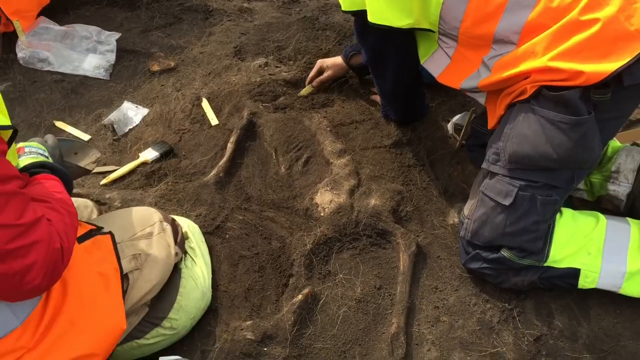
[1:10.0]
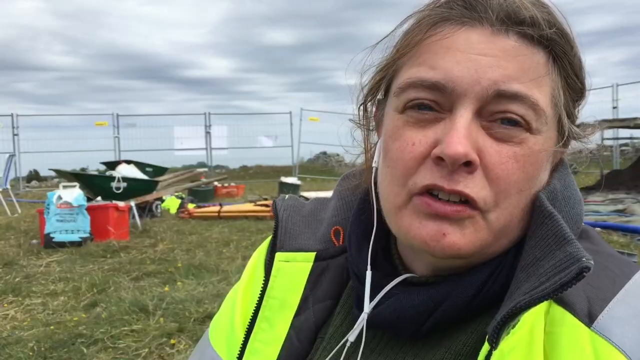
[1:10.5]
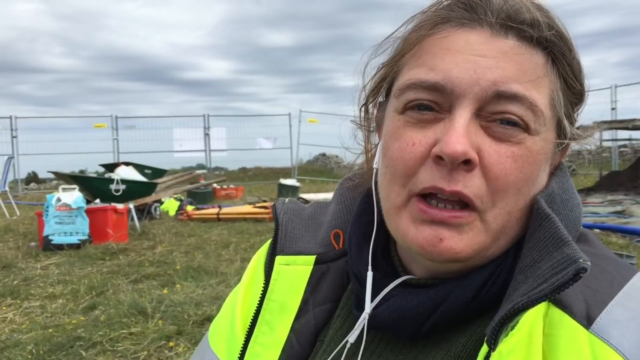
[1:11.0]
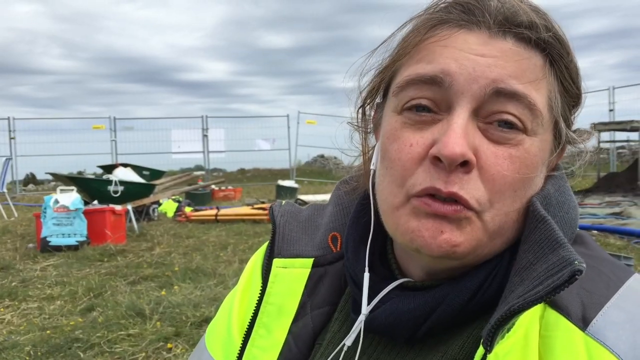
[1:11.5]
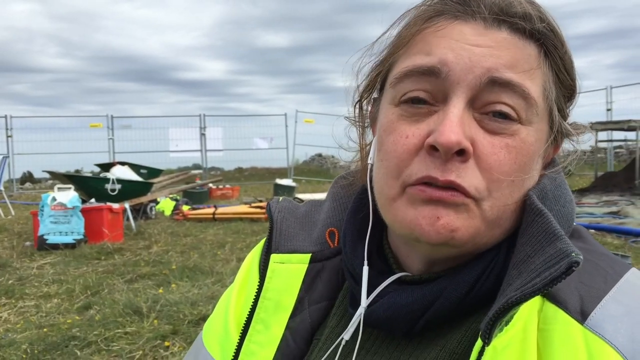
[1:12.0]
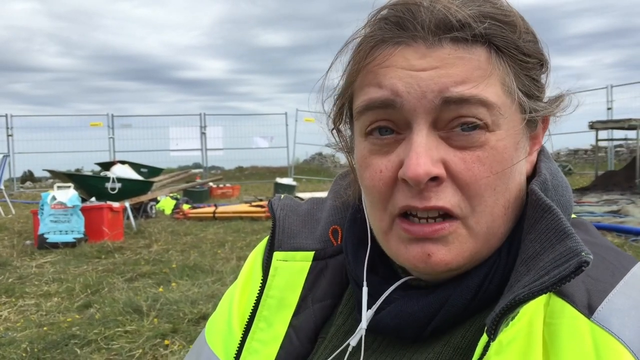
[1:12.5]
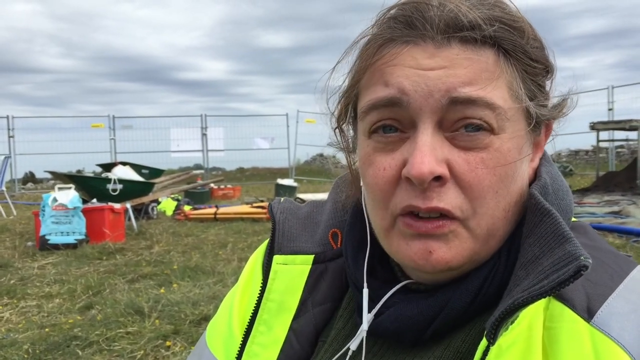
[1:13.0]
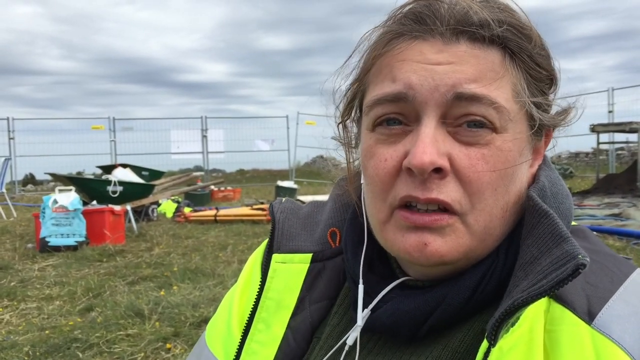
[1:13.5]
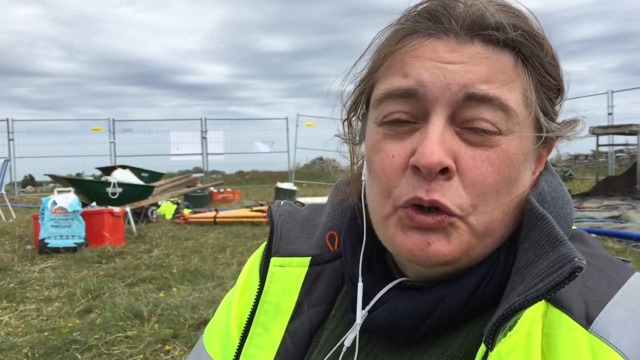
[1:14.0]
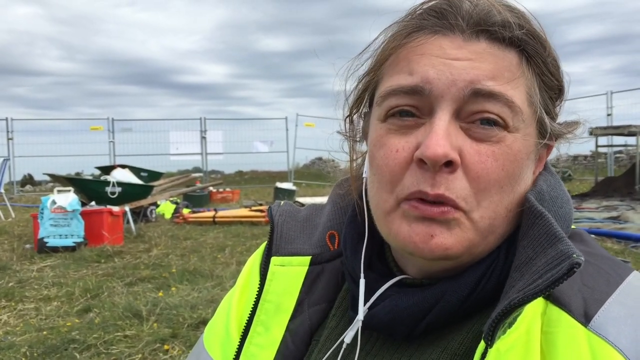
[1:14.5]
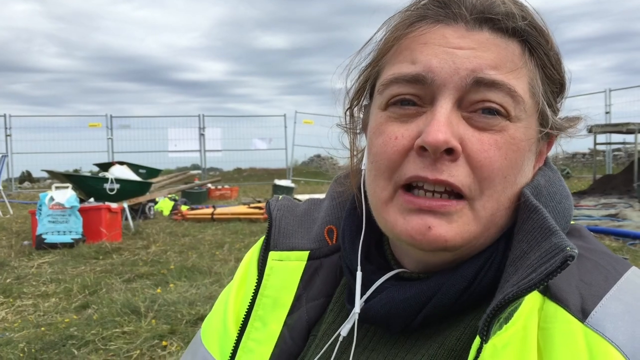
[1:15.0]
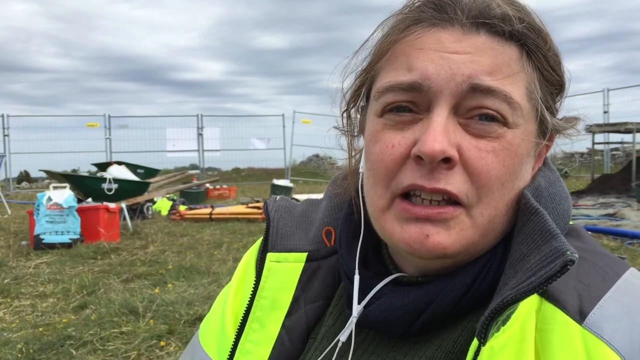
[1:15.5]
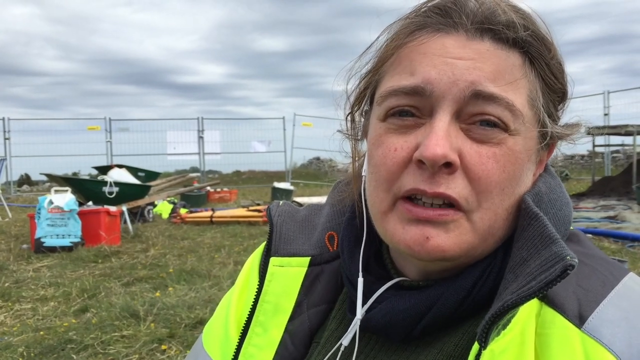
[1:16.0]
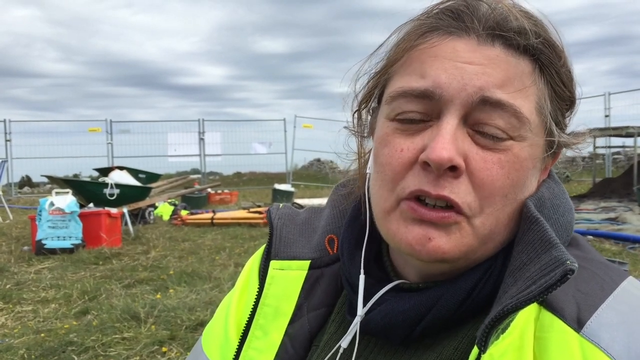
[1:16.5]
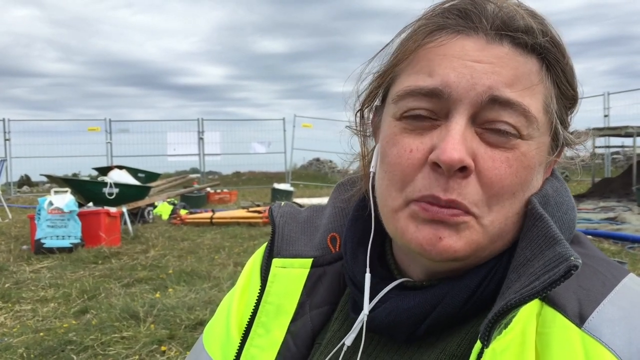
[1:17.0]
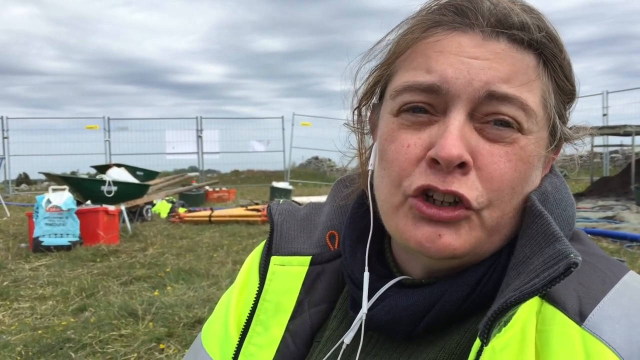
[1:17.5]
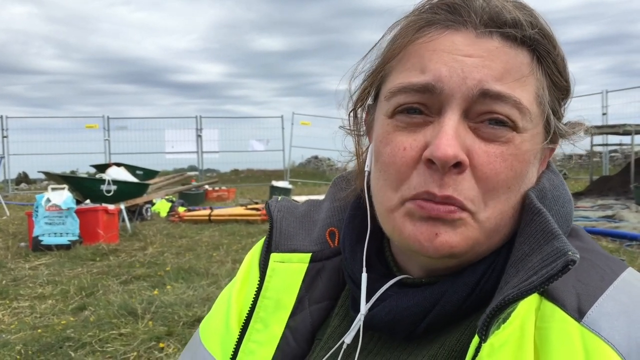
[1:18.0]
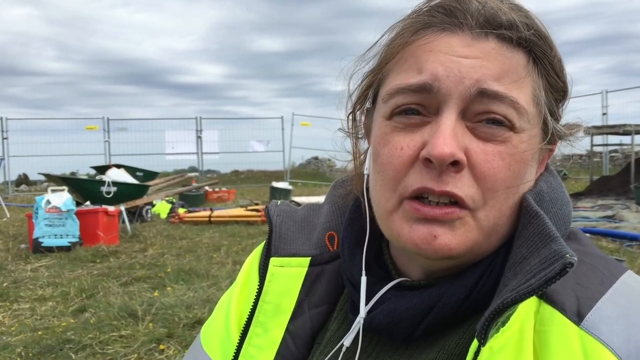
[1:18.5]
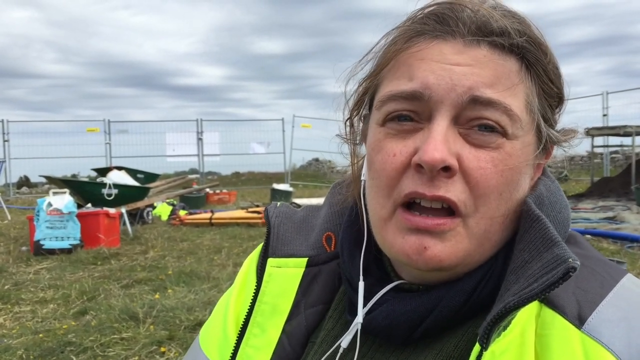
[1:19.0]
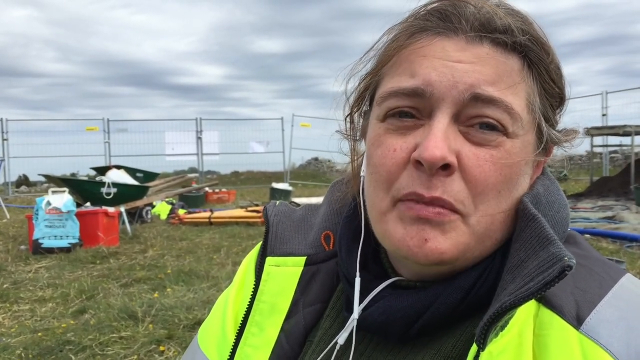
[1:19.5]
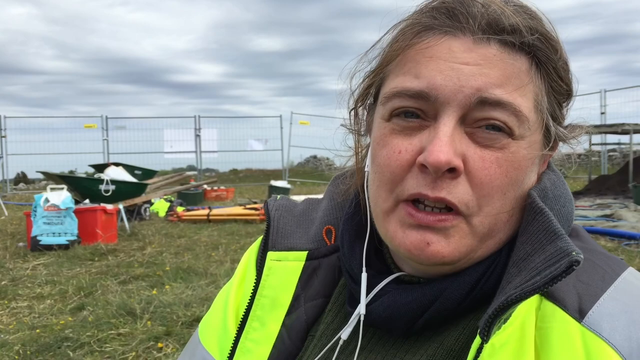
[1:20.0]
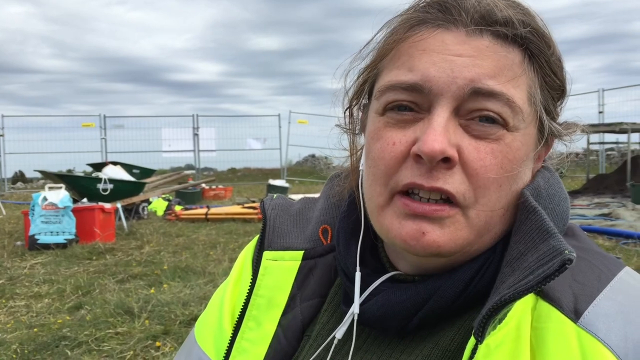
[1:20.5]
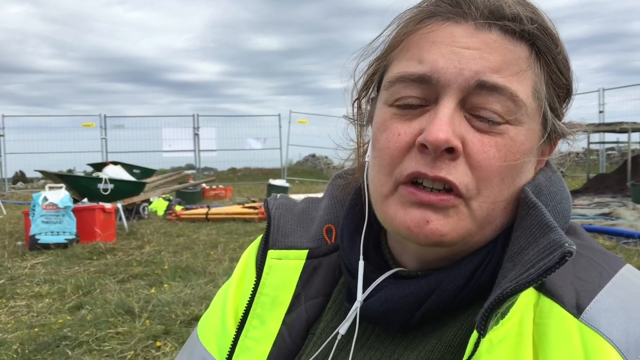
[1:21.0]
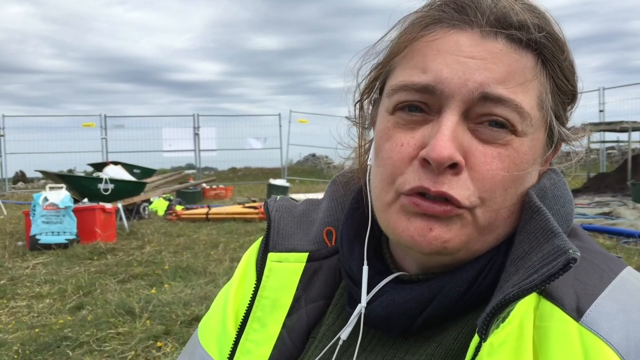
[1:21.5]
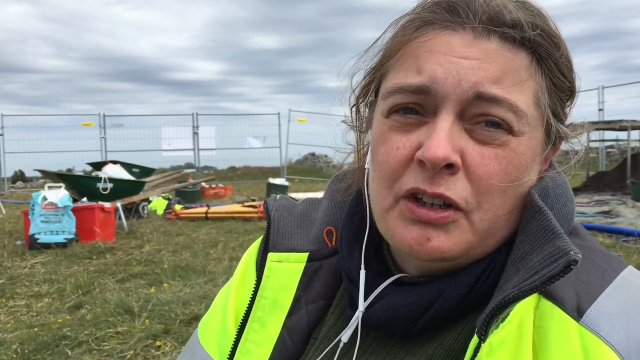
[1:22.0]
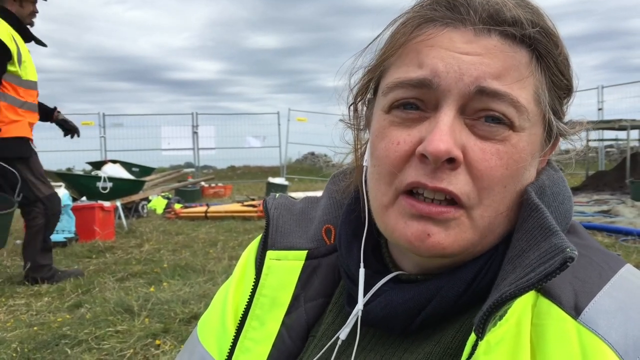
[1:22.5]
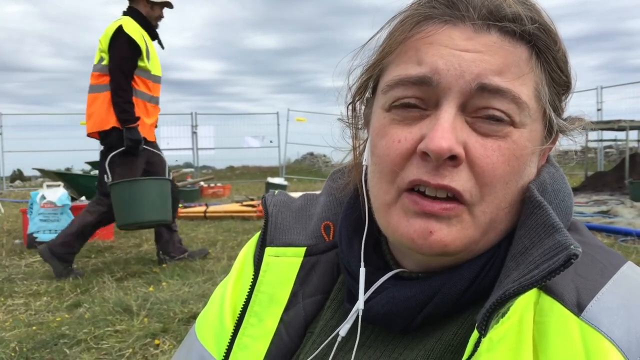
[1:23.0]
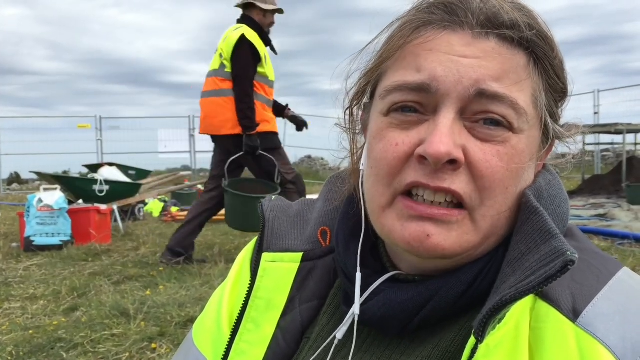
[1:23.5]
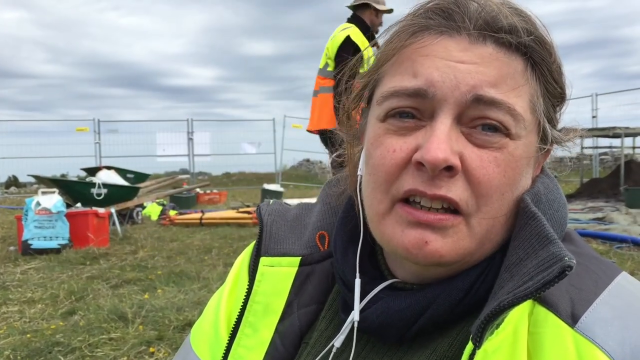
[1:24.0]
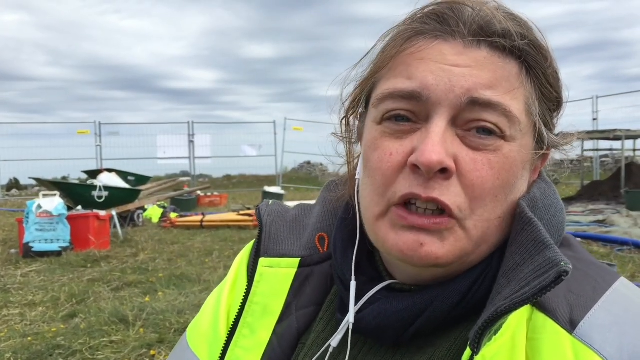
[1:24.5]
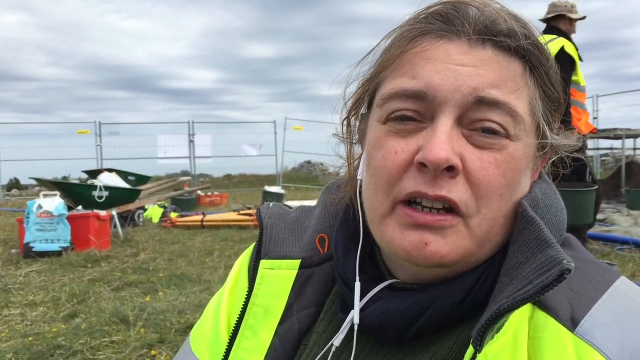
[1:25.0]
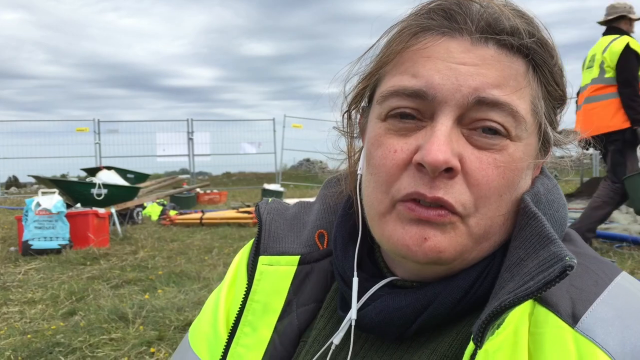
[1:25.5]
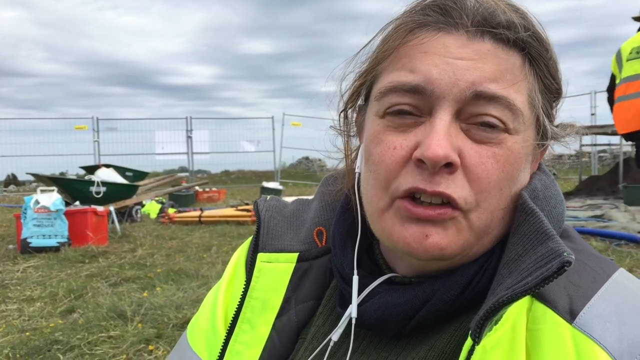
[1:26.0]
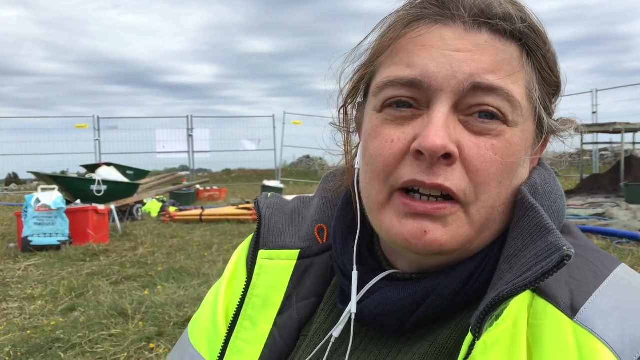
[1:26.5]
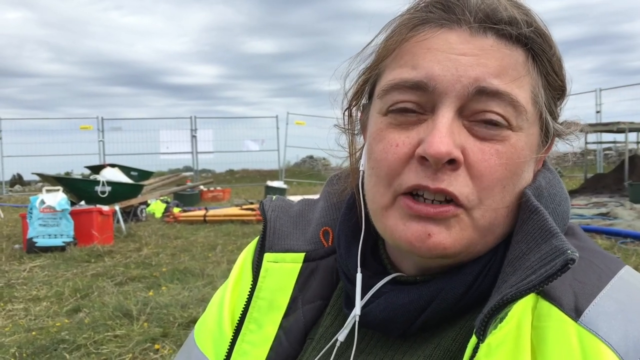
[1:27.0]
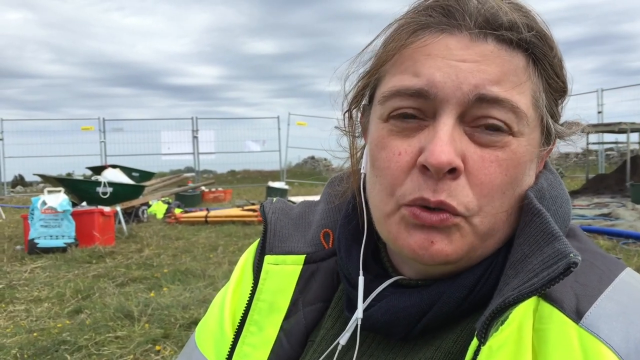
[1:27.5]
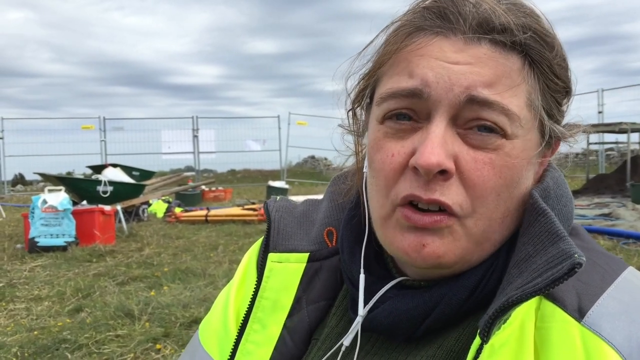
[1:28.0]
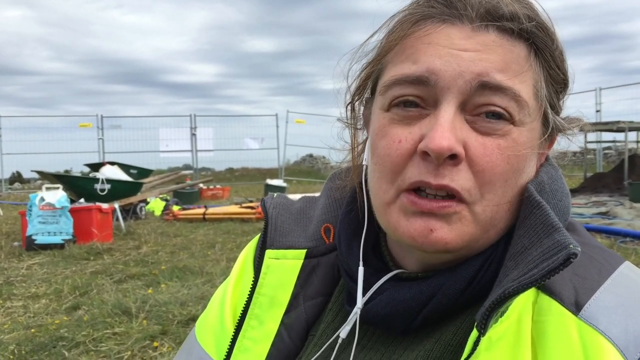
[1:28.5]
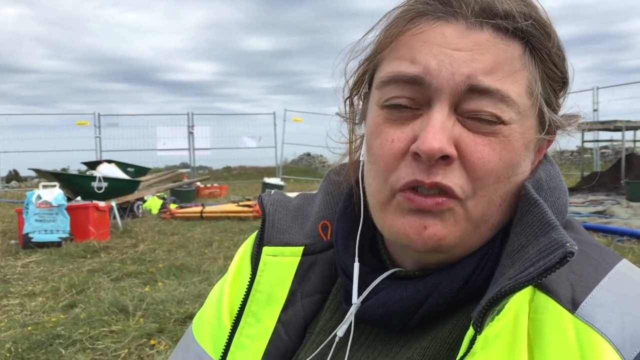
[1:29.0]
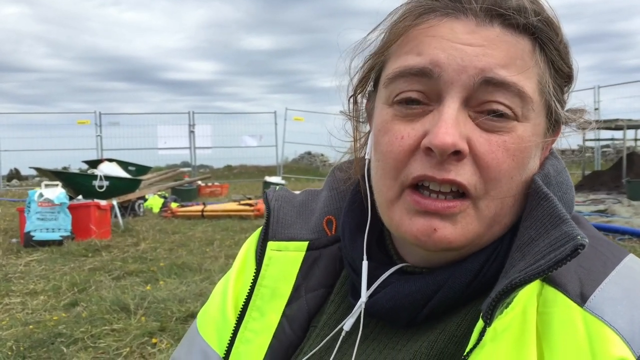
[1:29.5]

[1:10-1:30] The woman continues talking directly to the camera with her headphone in. Somebody in a high-vis jacket walks behind her carrying a bucket, moving slowly from one side of the frame to the other. The camera then stops on the people excavating the skeleton: two people on the ground in high-vis jackets and black pants use a brush and a stick to move dirt away from the item they are excavating. A plastic bag is on the floor. Behind the woman are a carrier bag, a red bucket, a green wheelbarrow and multiple fences, and a fly flies in the background. Behind the fences are trees, grass and a very cloudy, overcast sky. The woman has brown hair; the faces of the other people are not visible, only their bodies, as the camera zooms in on the people on the floor. It is slightly windy, with the woman's hair moving in the wind.